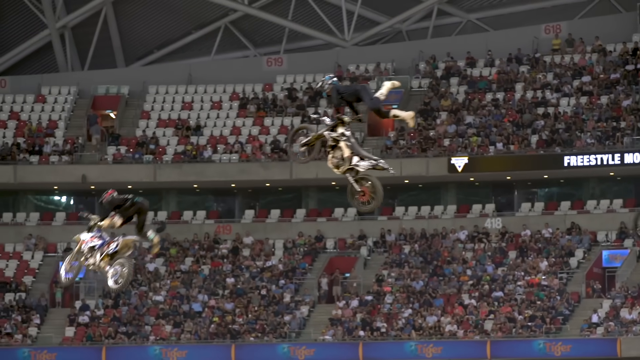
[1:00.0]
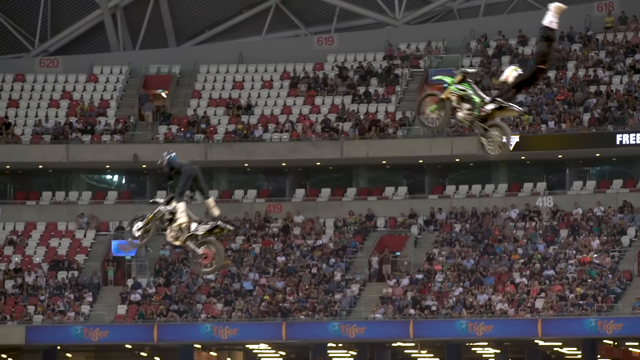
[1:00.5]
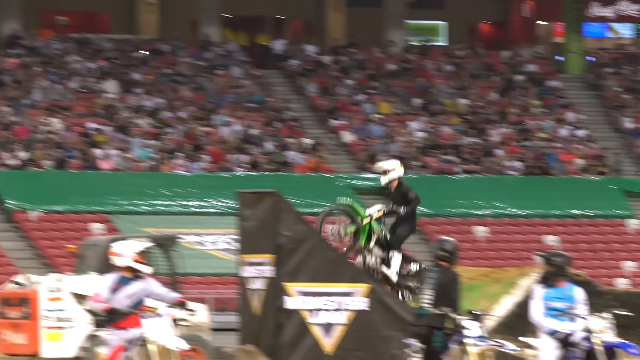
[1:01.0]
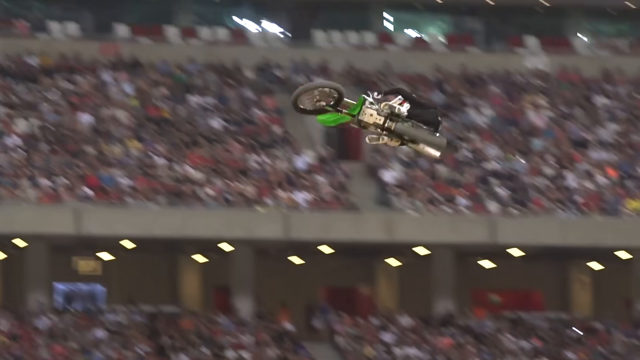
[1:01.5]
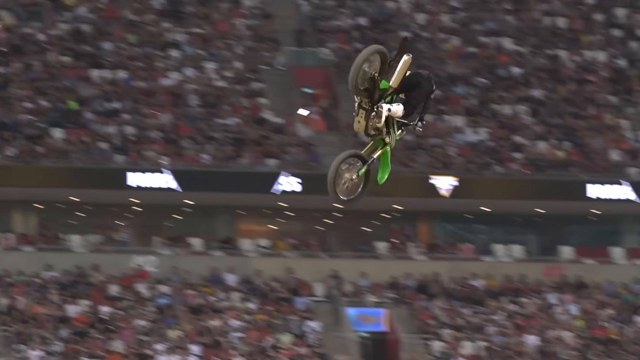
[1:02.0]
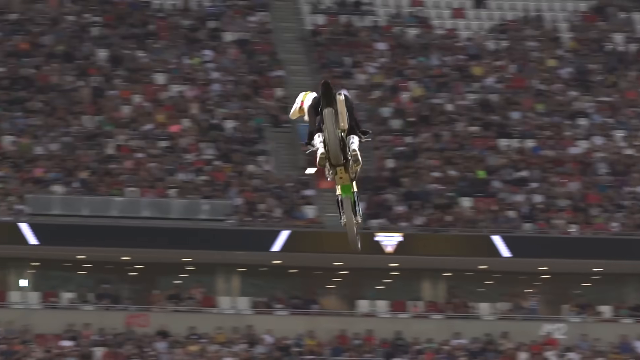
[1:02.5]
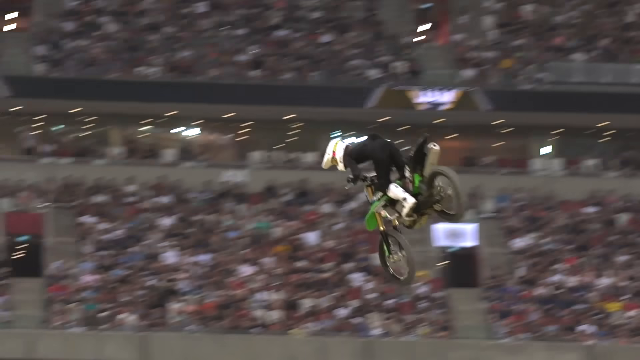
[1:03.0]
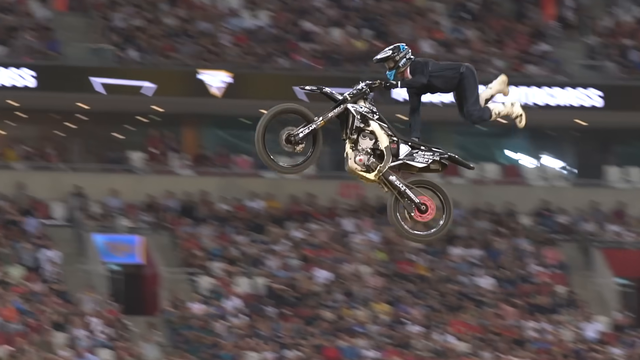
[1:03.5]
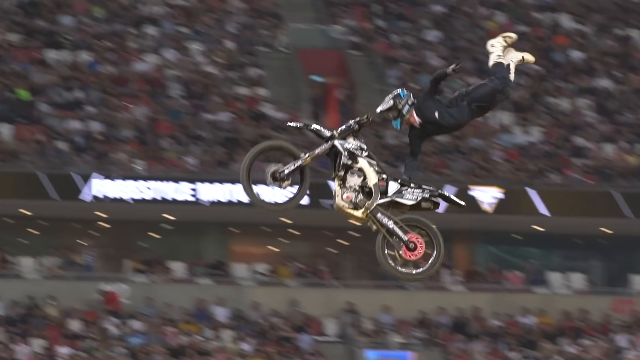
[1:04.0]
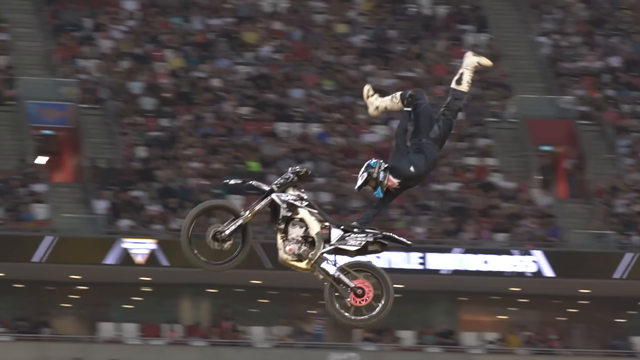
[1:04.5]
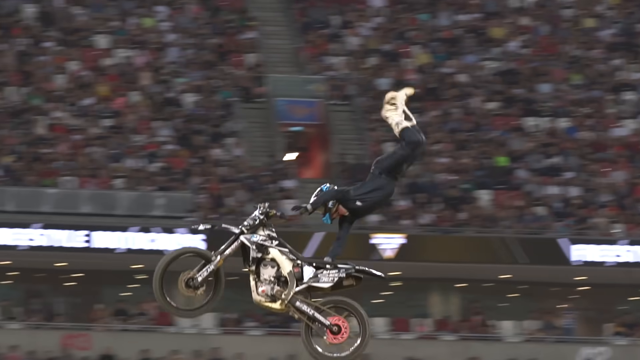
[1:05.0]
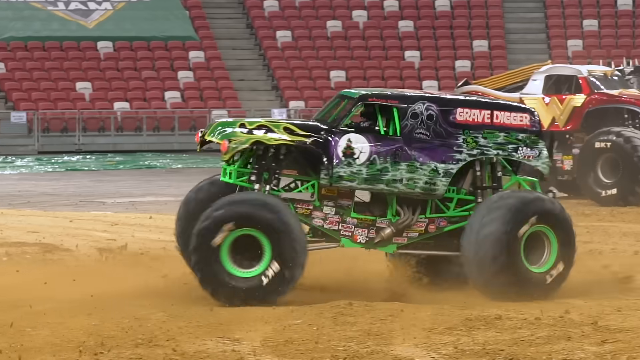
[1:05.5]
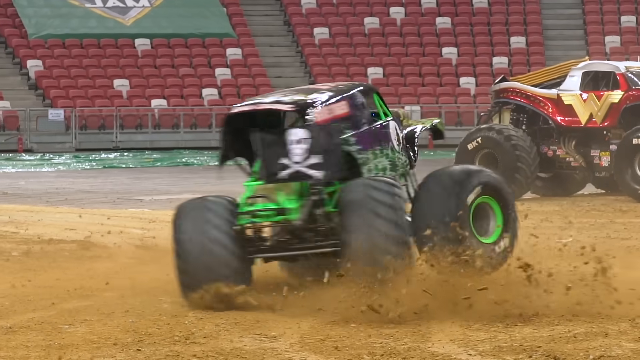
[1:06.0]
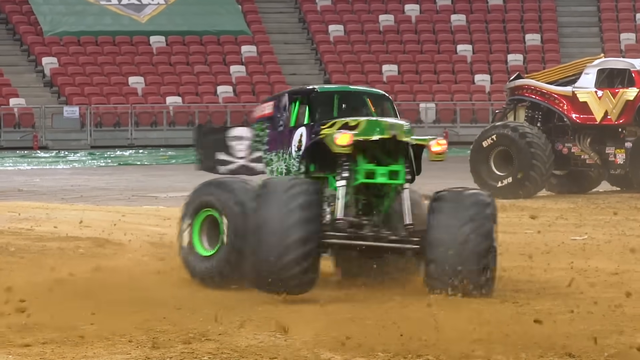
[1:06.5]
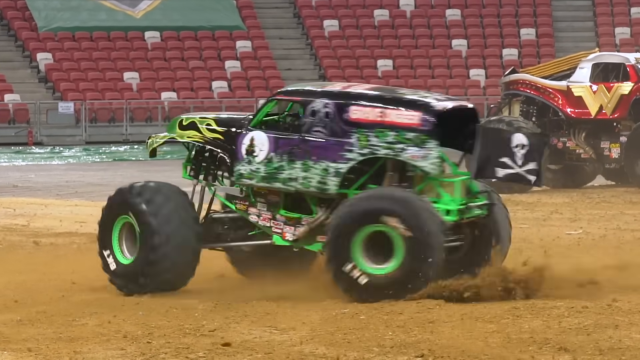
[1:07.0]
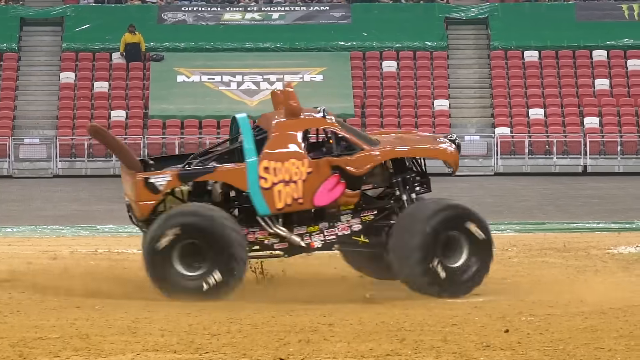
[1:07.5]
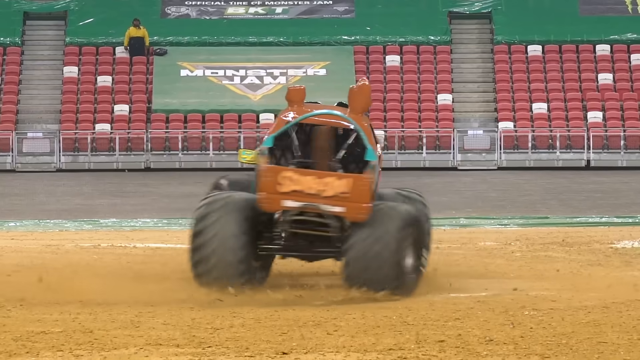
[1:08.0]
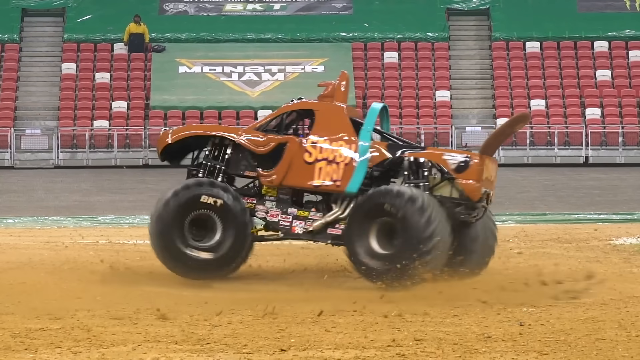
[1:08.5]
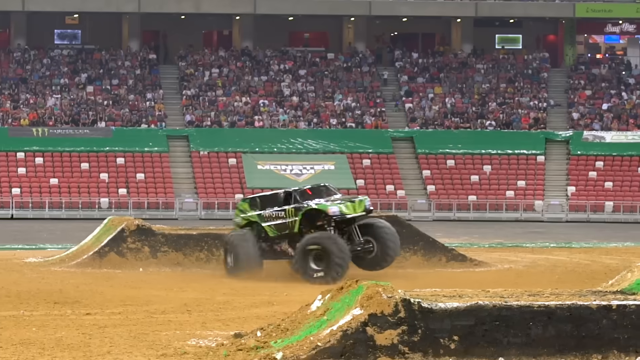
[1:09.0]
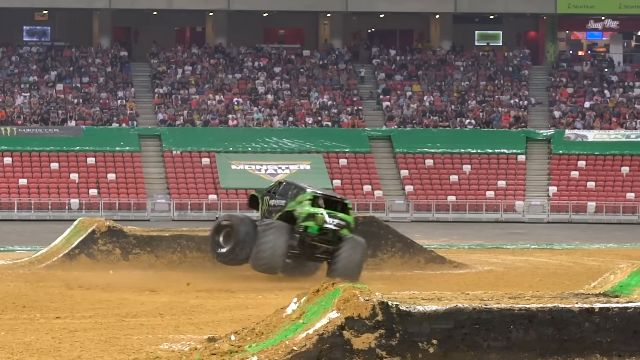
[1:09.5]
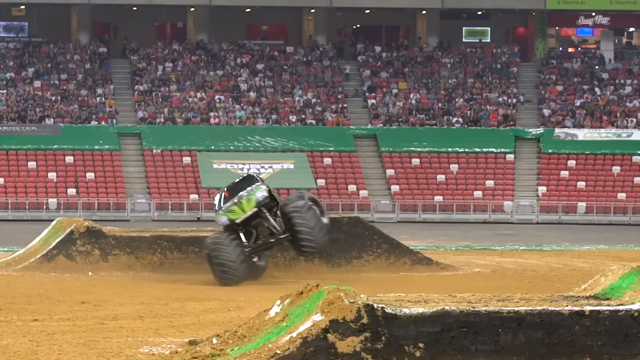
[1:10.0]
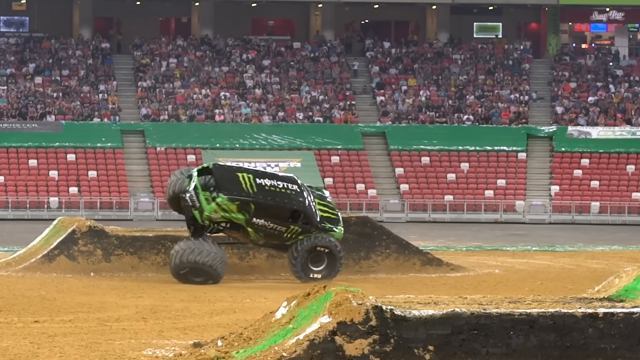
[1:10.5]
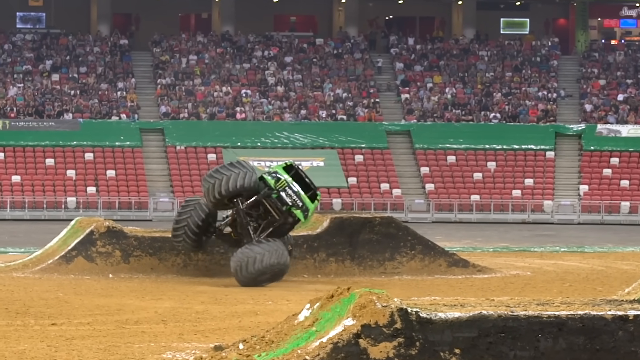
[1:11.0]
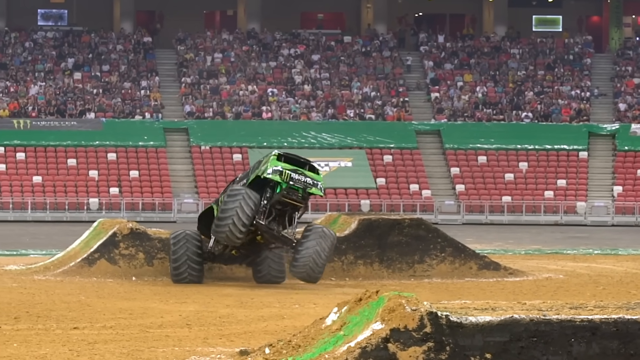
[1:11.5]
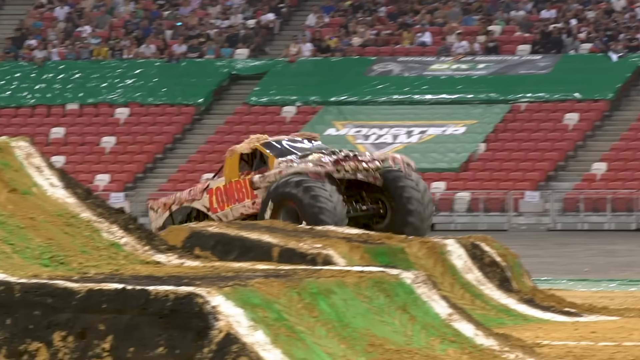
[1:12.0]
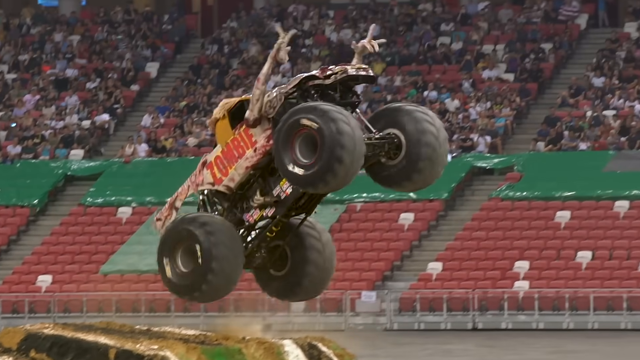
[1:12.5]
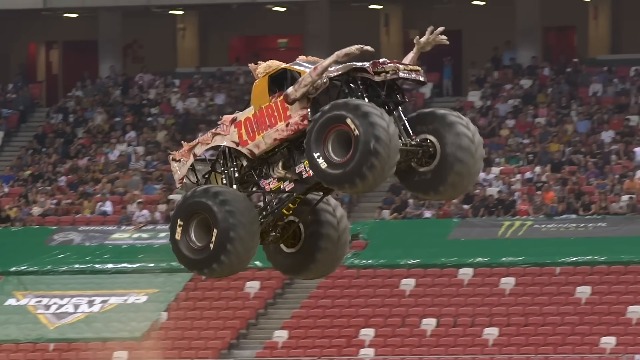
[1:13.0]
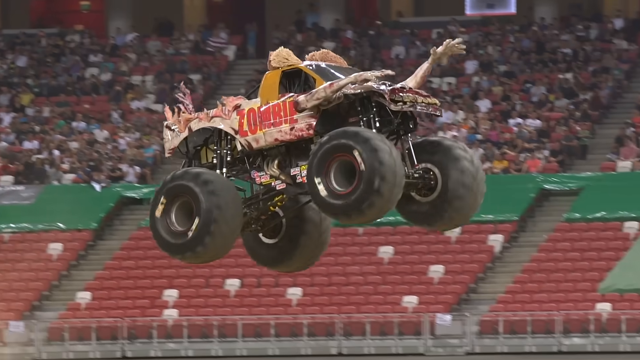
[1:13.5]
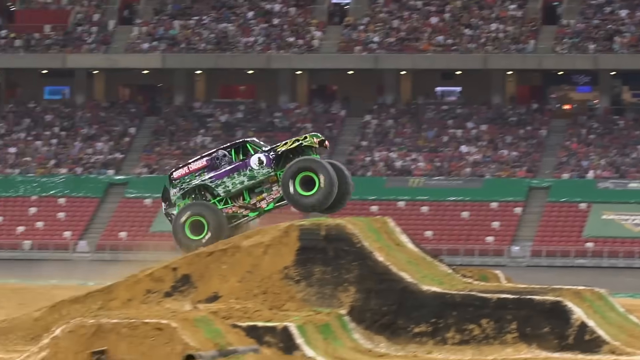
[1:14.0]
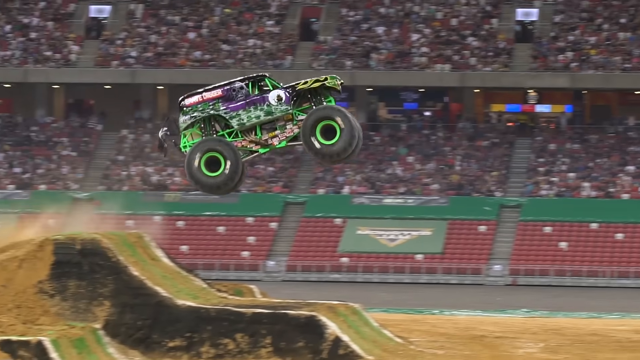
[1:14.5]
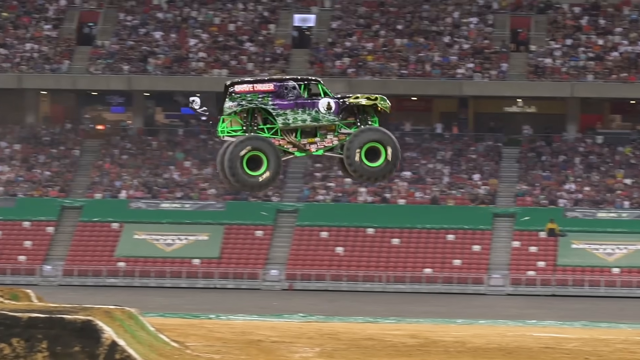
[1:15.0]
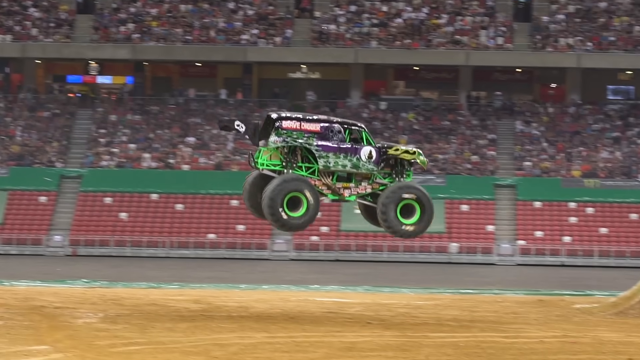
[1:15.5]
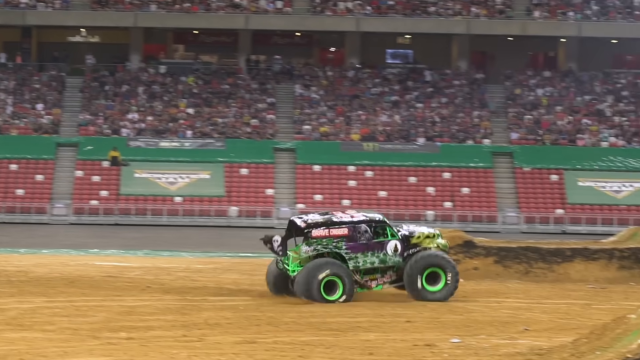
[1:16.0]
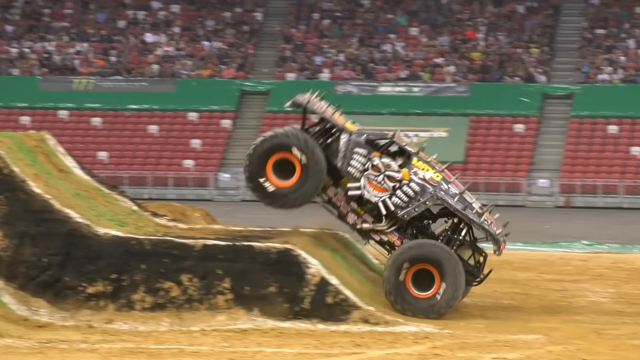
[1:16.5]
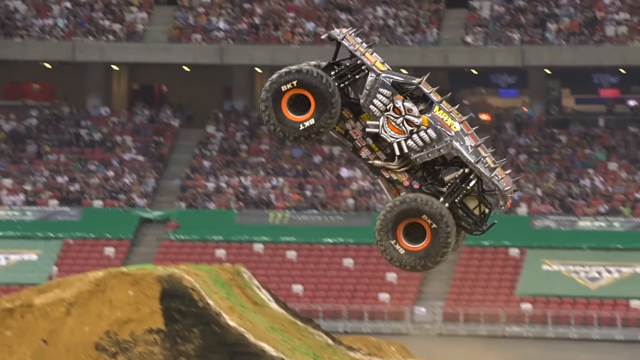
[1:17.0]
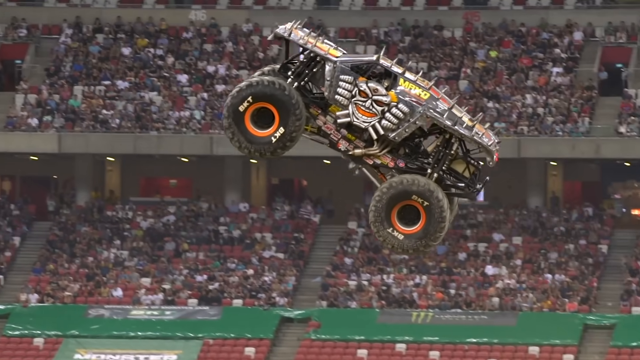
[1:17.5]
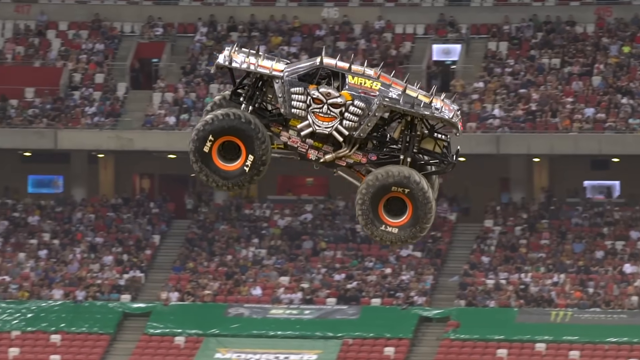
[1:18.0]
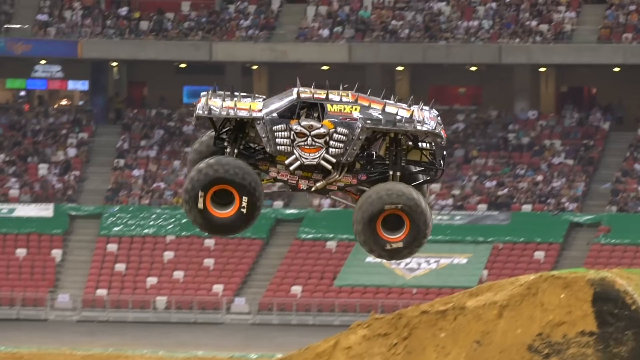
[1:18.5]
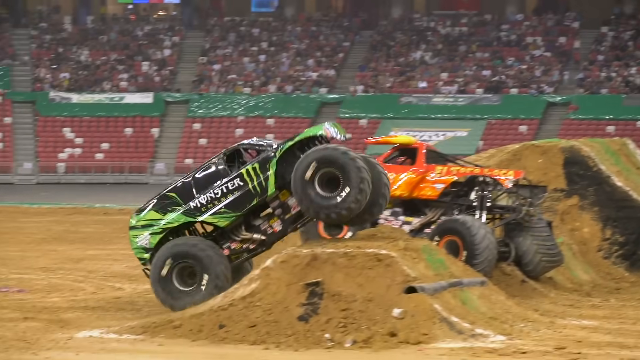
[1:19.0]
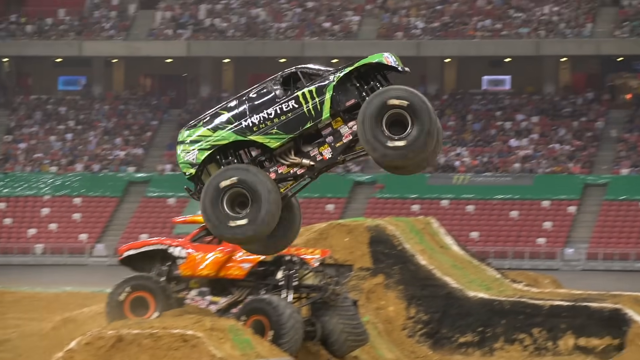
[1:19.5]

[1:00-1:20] Men ride bicycles, flying them up into the air and then releasing them. The video then changes to a garden, where a man gives a baby a toy car. It returns to the game on the field, where different cars, orange and green, ride on a green, mountain-like structure in an open field. The cars show different abilities, such as going on two wheels. A man in black greets people. The bikers fly very high, and one releases his bike in the air.